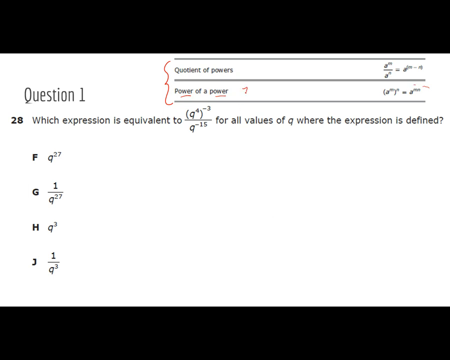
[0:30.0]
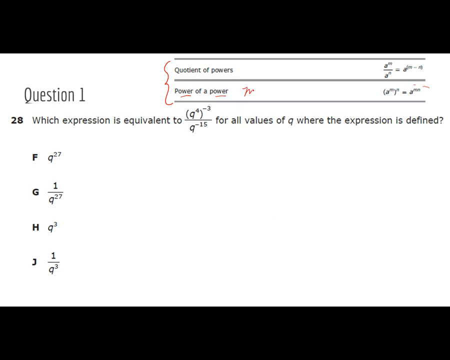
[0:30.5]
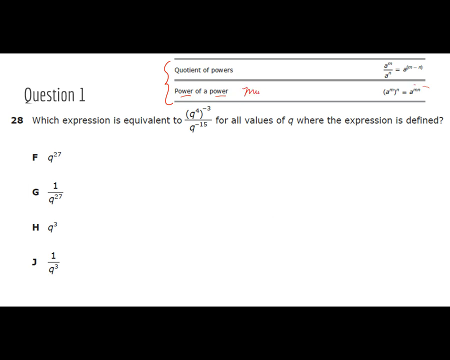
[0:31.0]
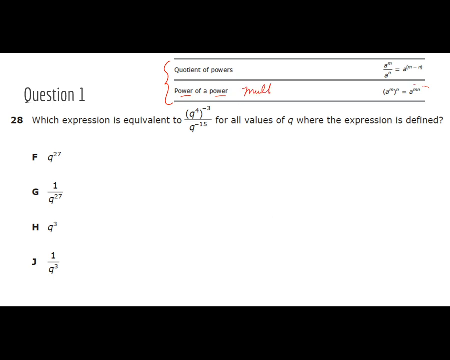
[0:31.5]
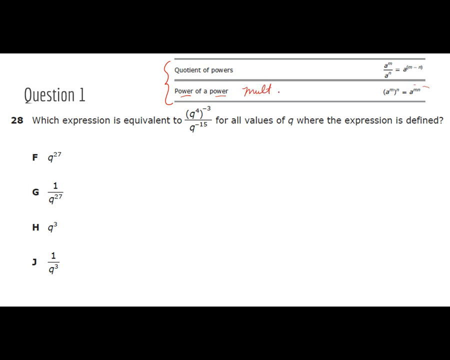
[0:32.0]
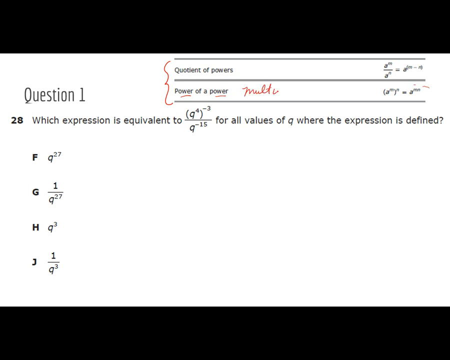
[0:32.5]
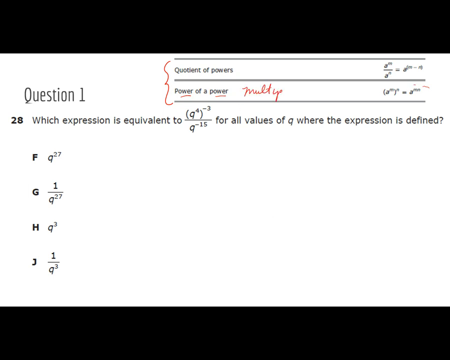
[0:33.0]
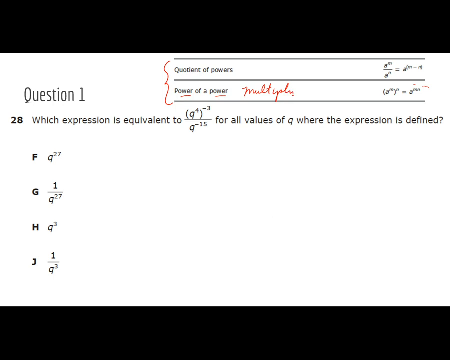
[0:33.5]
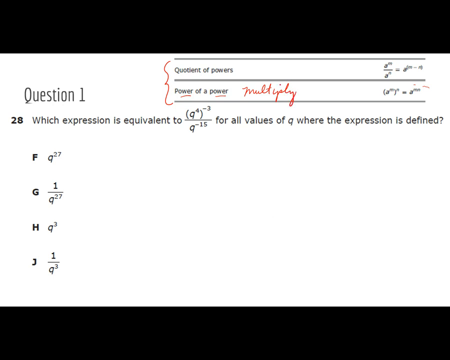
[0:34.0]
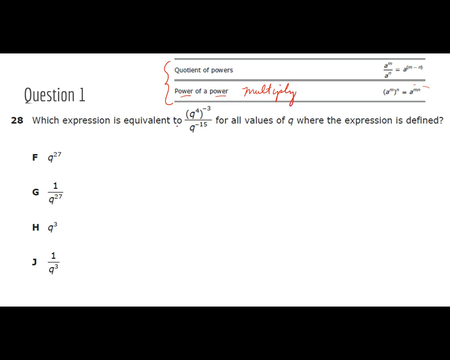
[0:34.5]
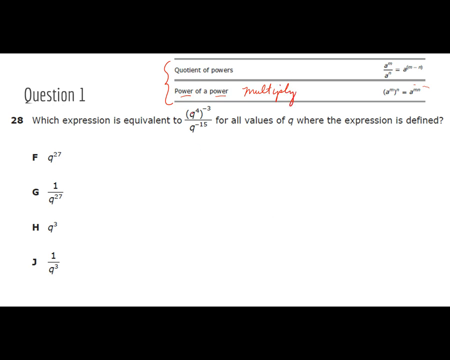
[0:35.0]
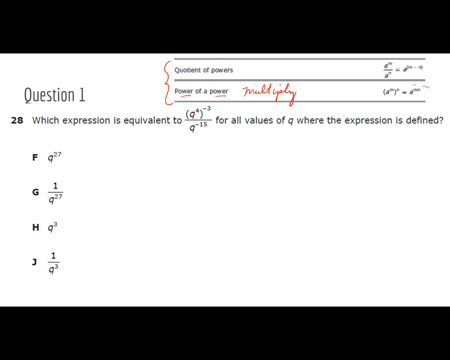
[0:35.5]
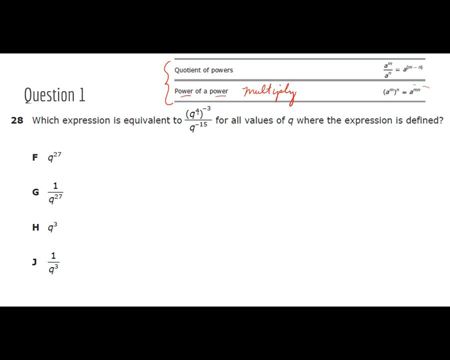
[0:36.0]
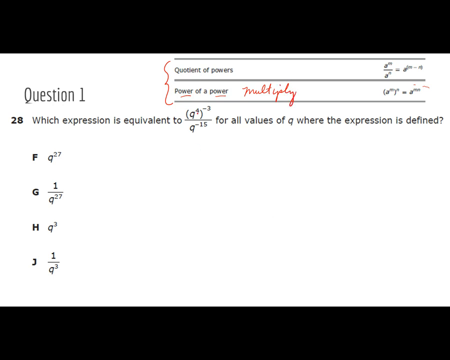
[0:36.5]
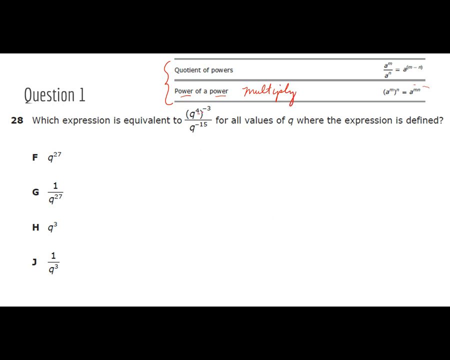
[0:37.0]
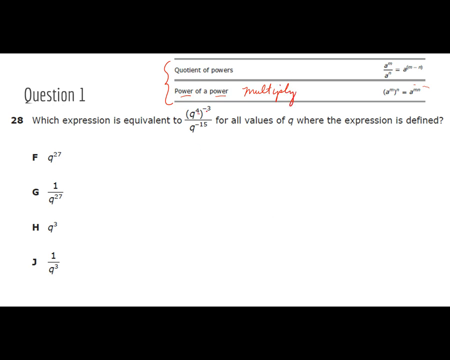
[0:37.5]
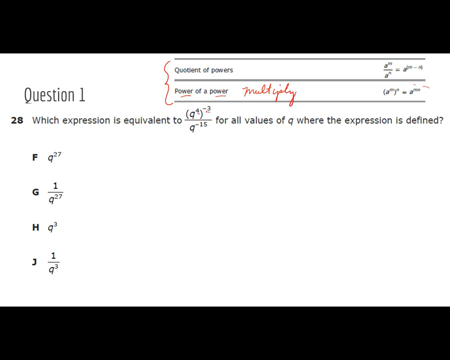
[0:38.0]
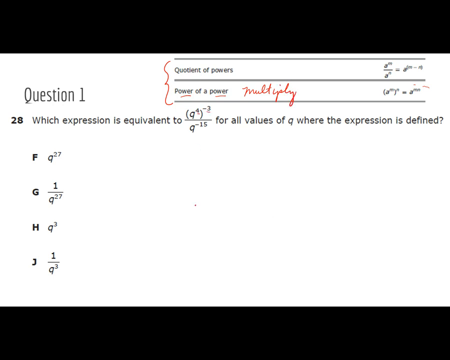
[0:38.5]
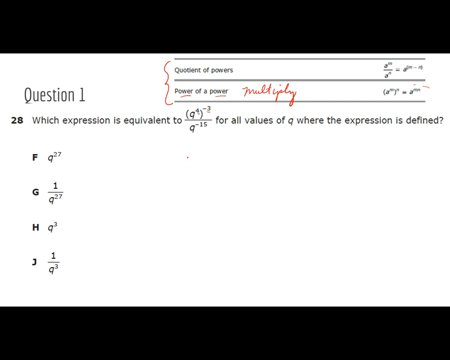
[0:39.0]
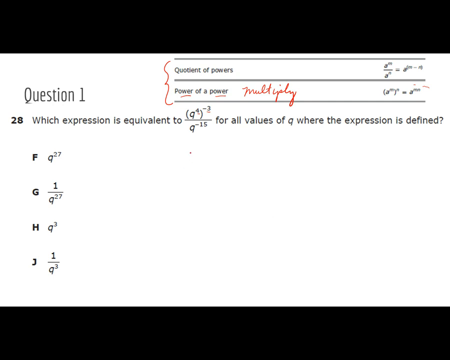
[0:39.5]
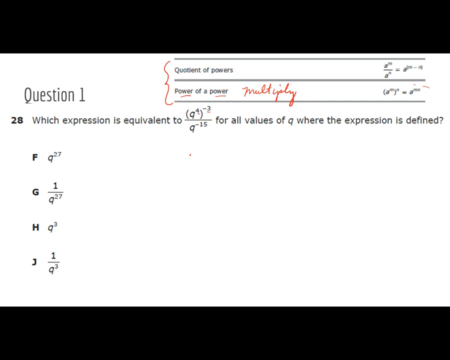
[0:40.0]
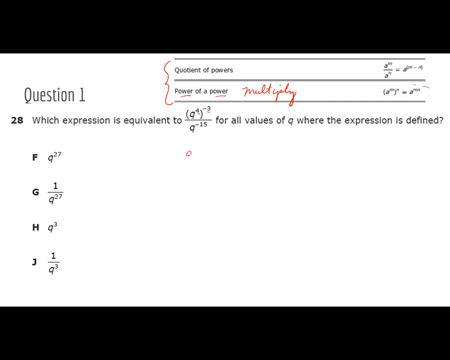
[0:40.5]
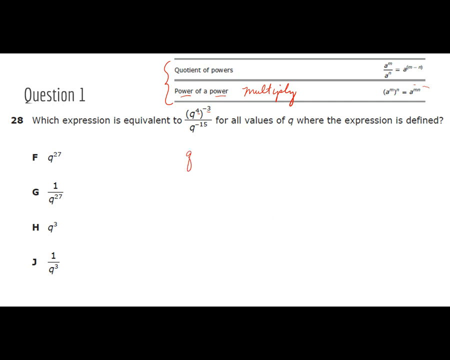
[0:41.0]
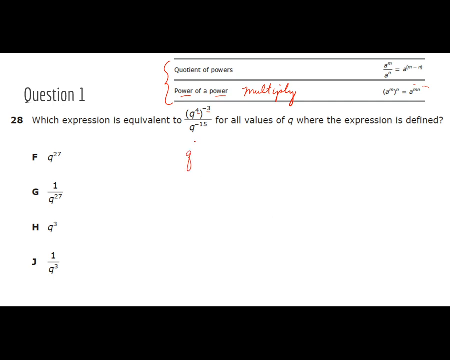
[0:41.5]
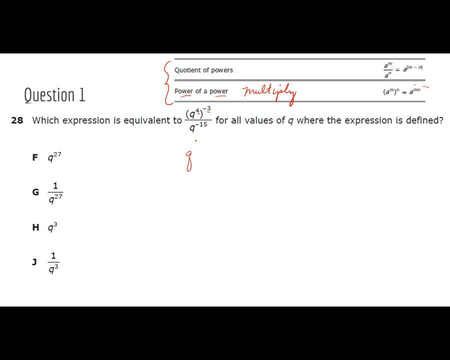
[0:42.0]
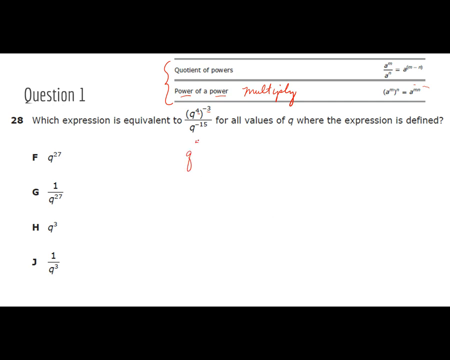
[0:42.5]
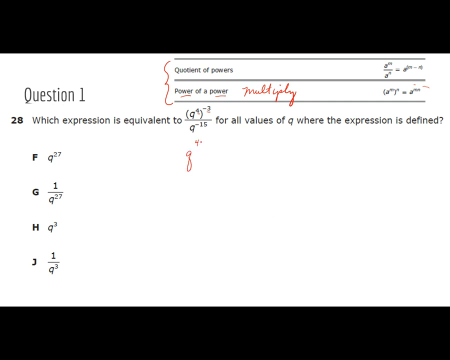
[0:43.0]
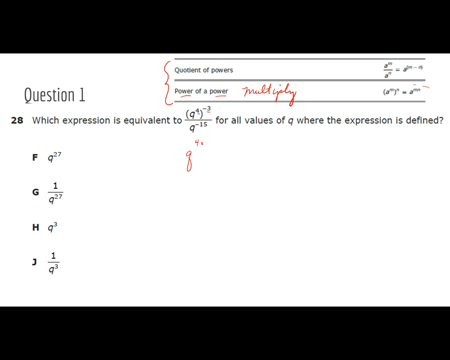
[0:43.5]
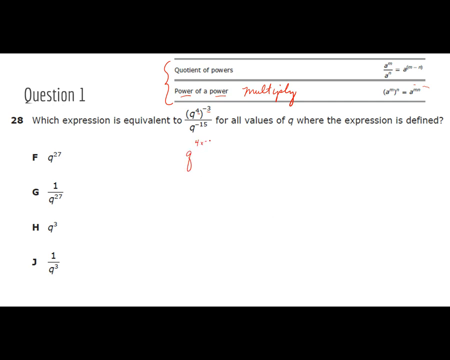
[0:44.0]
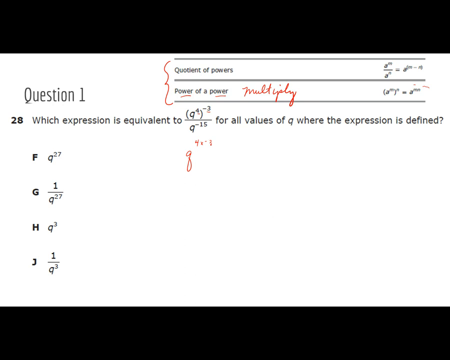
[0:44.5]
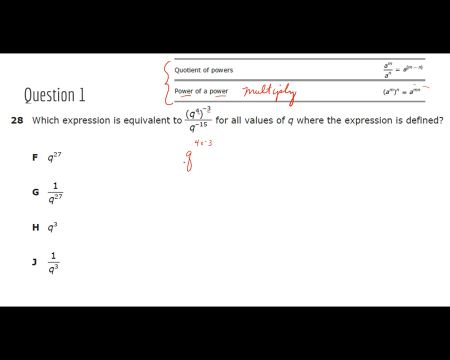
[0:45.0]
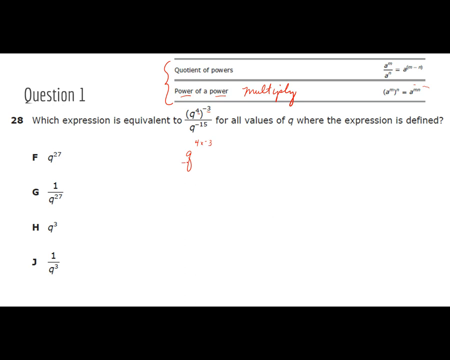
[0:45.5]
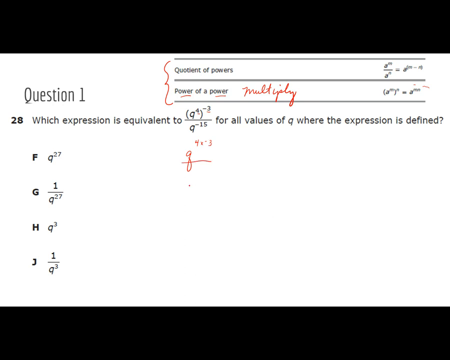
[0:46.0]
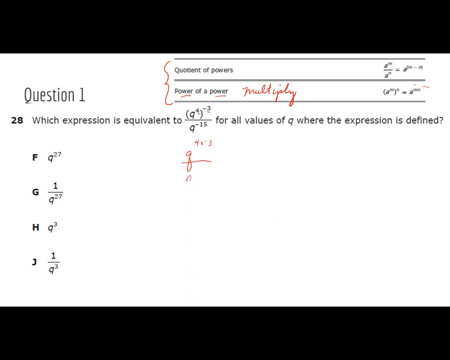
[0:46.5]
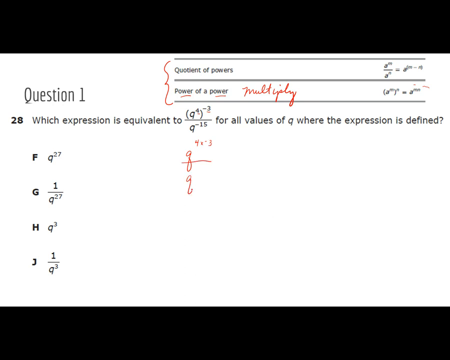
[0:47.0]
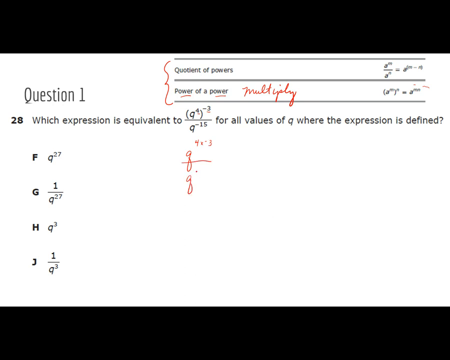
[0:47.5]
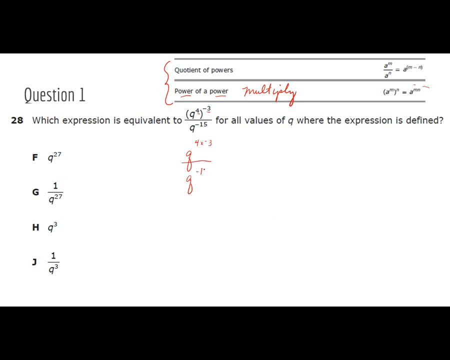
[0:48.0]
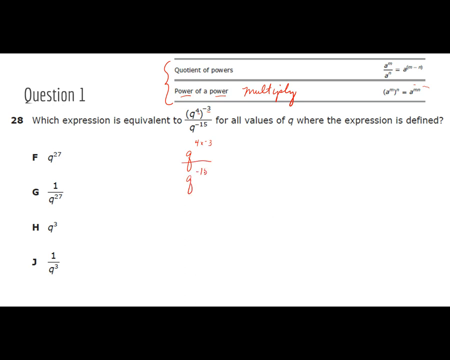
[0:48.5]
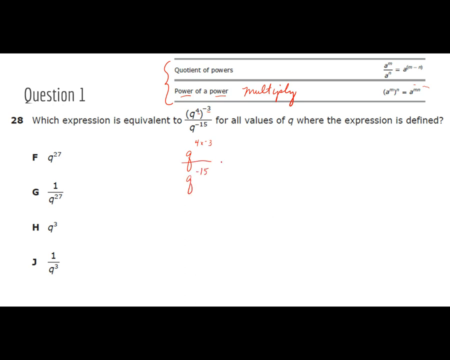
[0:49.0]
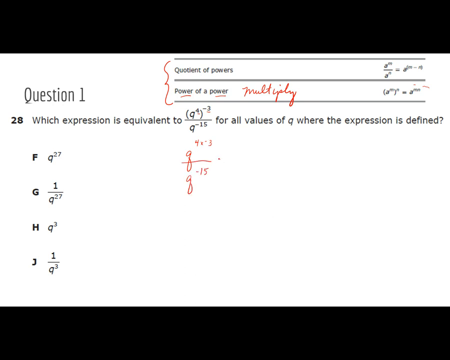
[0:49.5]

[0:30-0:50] Question 1 remains on screen, asking which expression is equivalent to (q to the power of 4) to the power of minus 3, divided by q to the power of minus 15, with options F q to the power of 27, G 1 over q to the power of 27, H q to the power of 3, and J 1 over q to the power of 3. The cursor writes "multiply" after the phrase "power of a power". To the right of F, it starts writing the answer: q to the power of 4 times minus 3, divided by q to the power of minus 15.